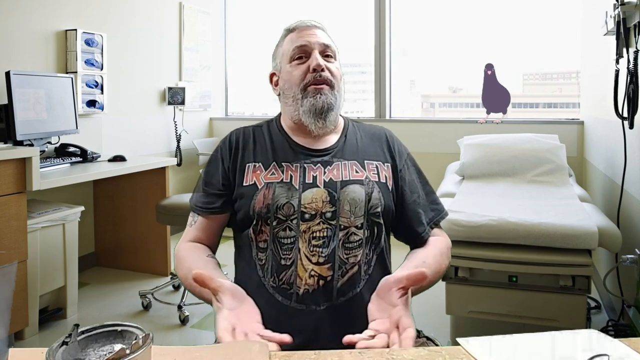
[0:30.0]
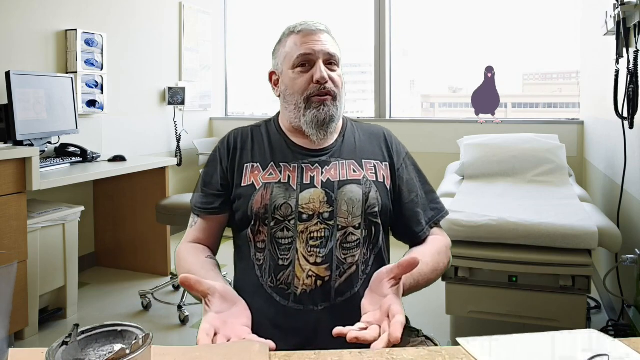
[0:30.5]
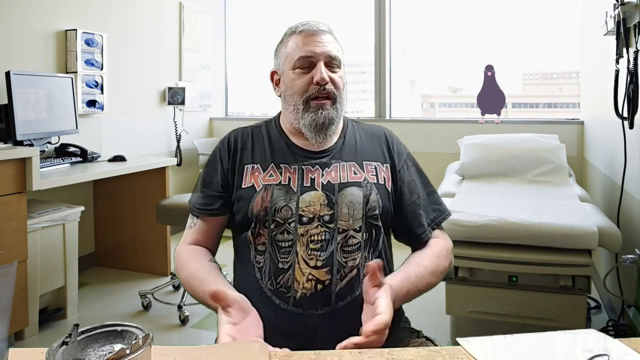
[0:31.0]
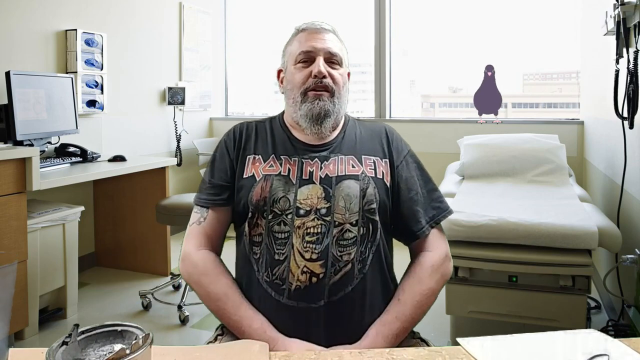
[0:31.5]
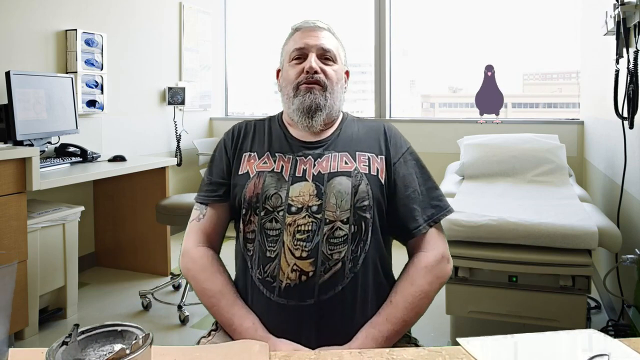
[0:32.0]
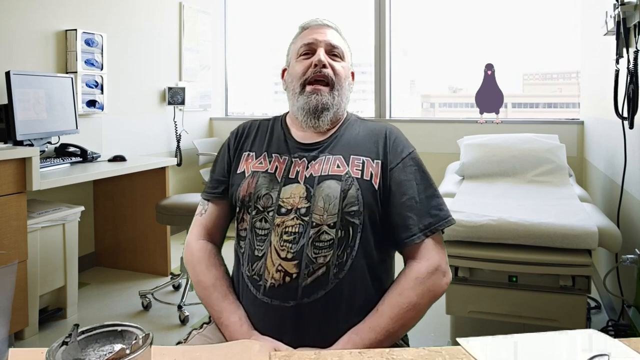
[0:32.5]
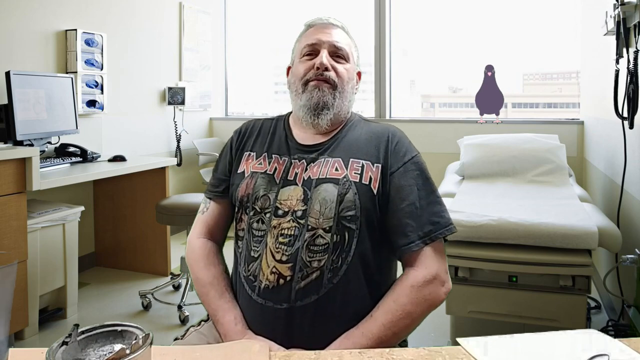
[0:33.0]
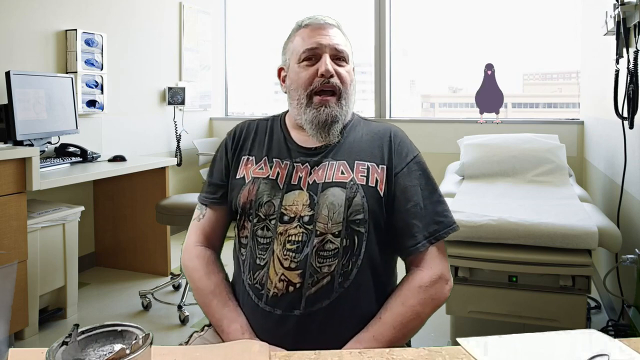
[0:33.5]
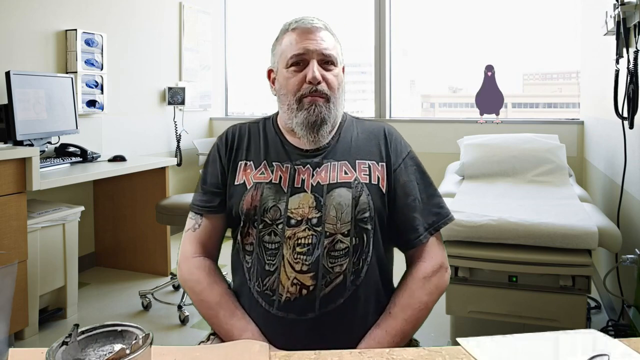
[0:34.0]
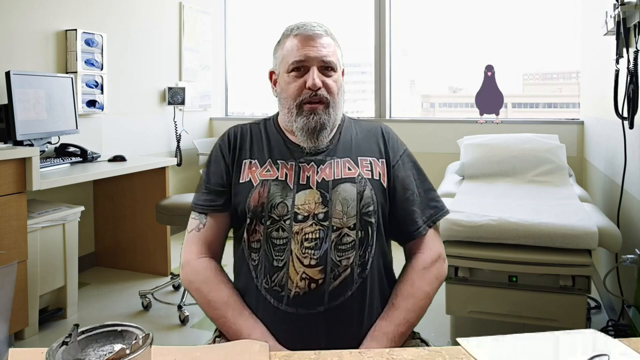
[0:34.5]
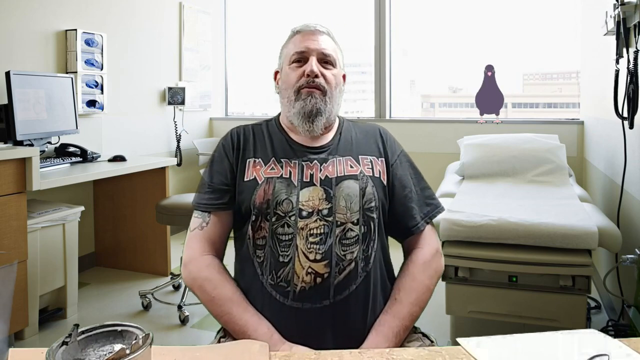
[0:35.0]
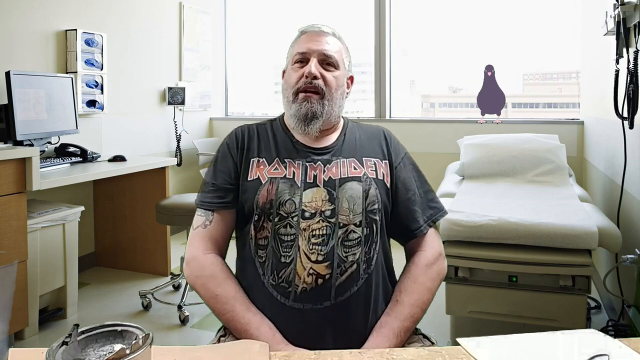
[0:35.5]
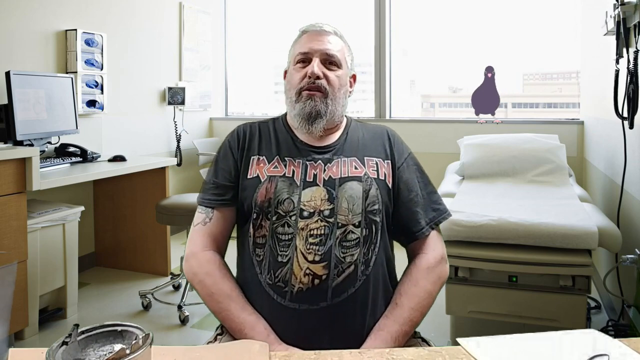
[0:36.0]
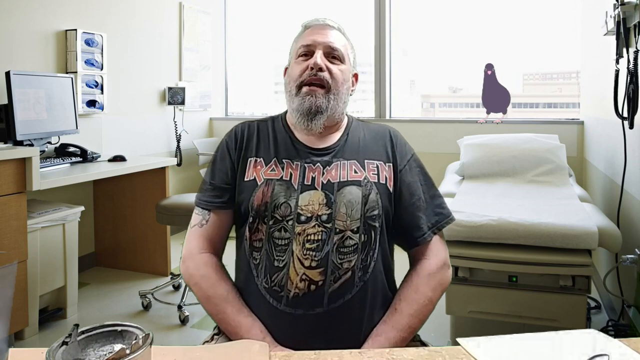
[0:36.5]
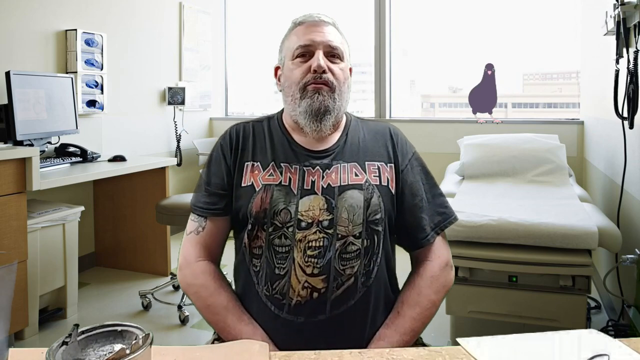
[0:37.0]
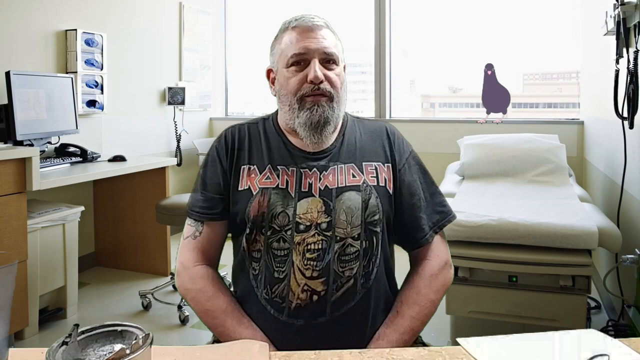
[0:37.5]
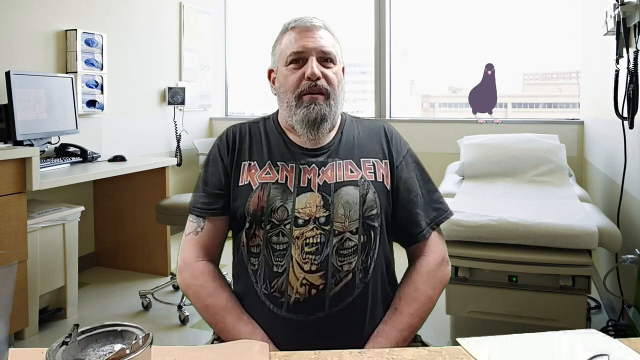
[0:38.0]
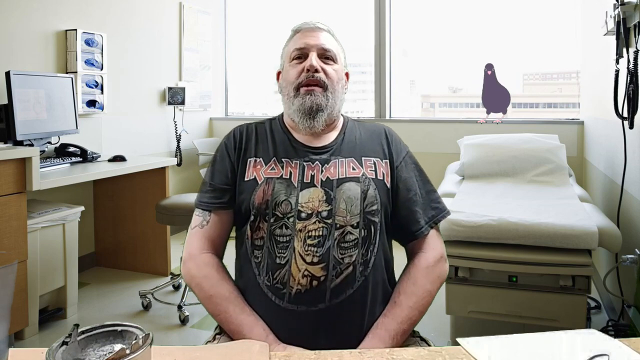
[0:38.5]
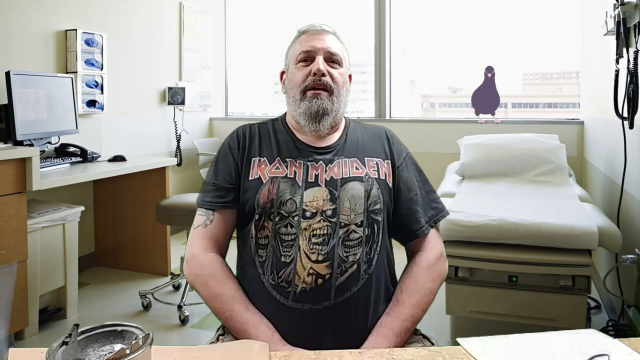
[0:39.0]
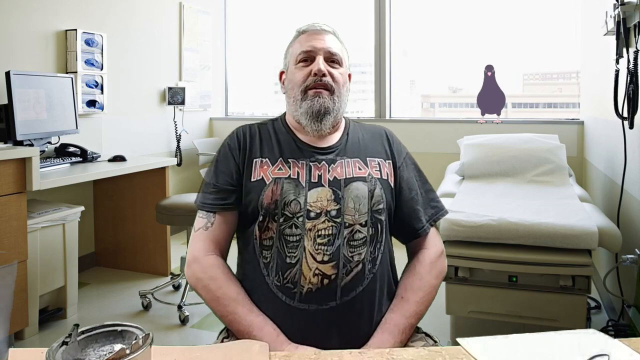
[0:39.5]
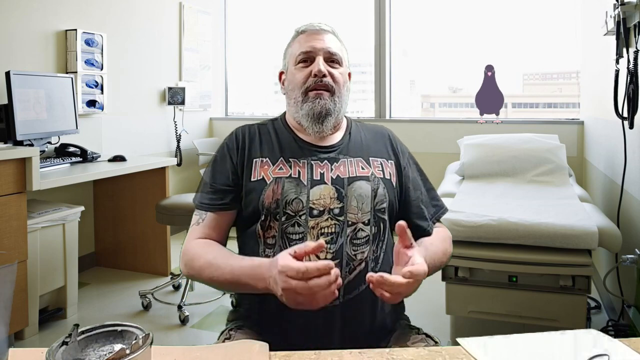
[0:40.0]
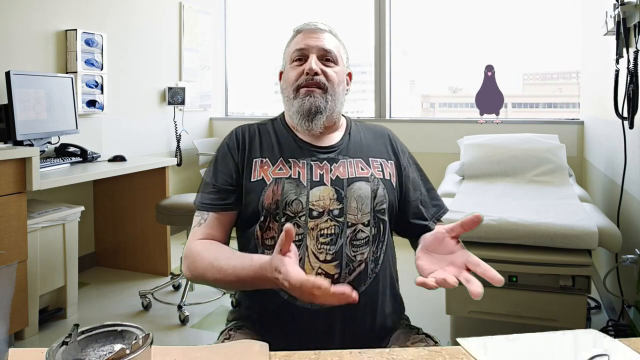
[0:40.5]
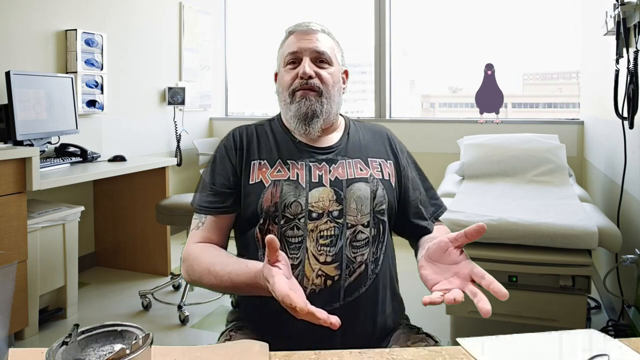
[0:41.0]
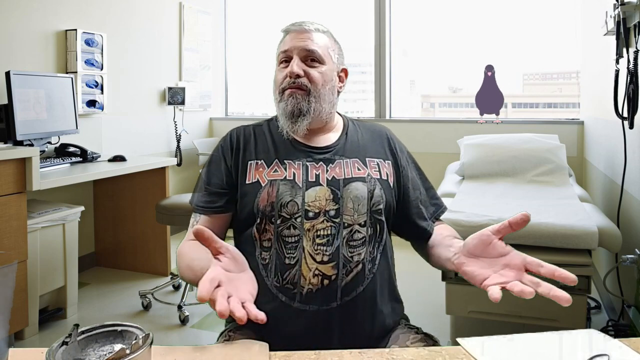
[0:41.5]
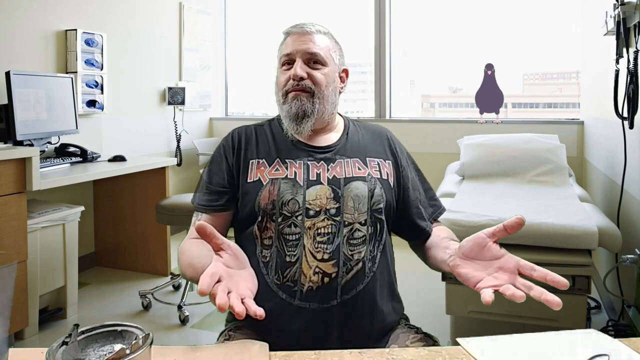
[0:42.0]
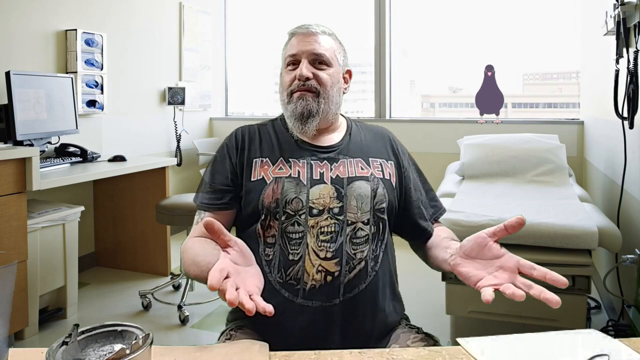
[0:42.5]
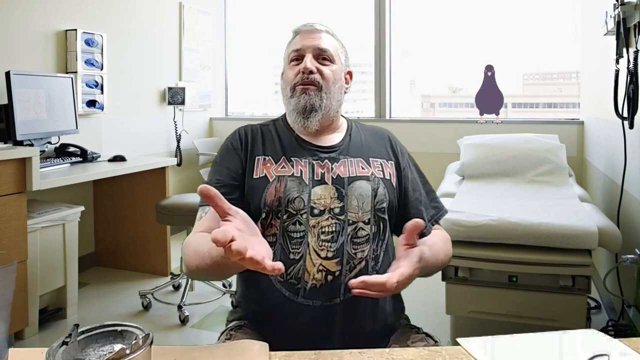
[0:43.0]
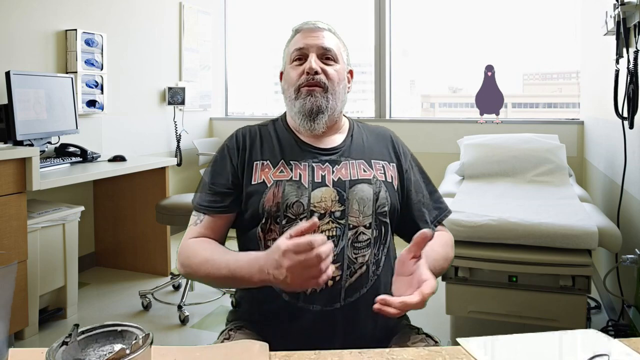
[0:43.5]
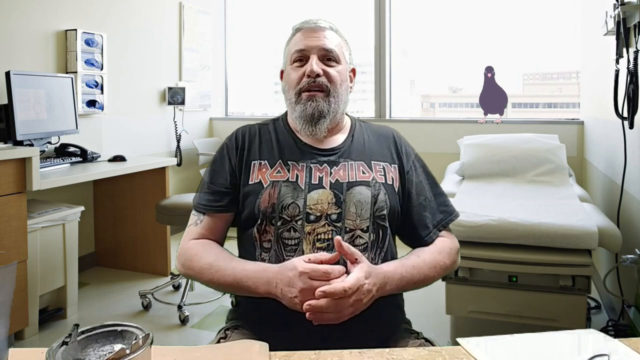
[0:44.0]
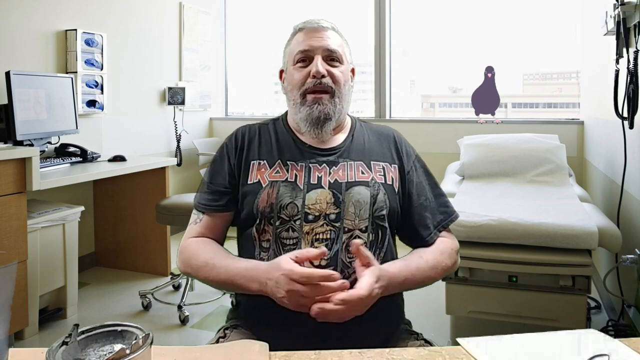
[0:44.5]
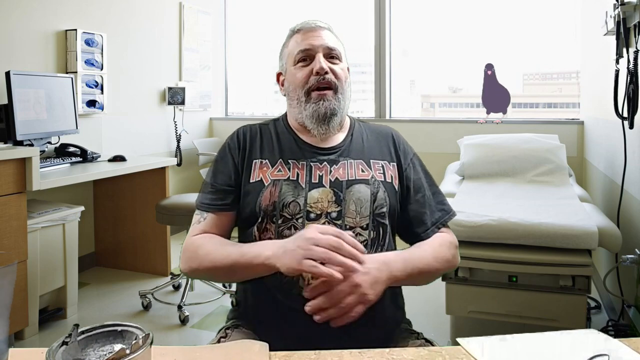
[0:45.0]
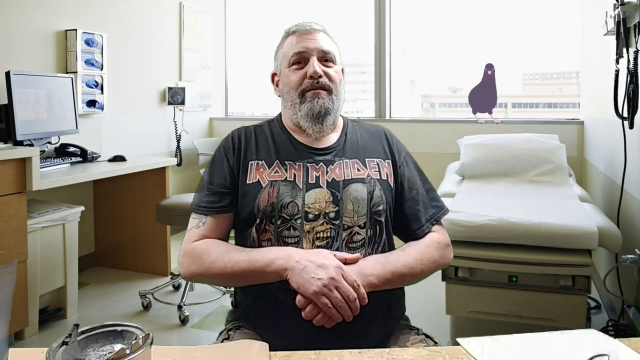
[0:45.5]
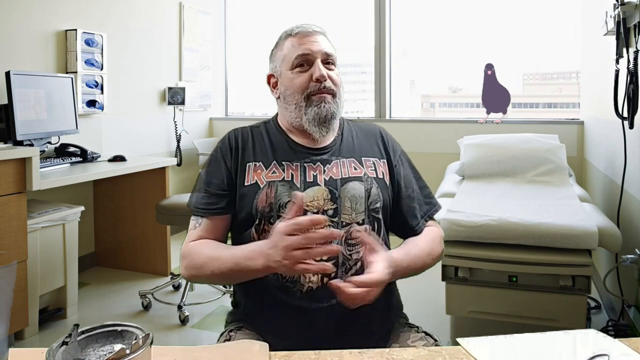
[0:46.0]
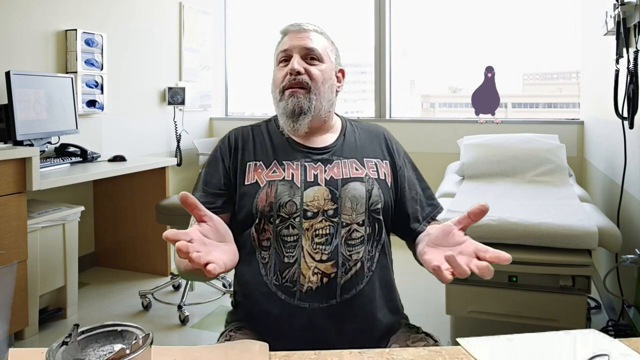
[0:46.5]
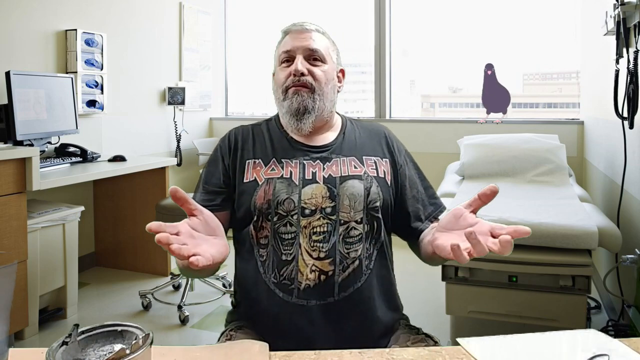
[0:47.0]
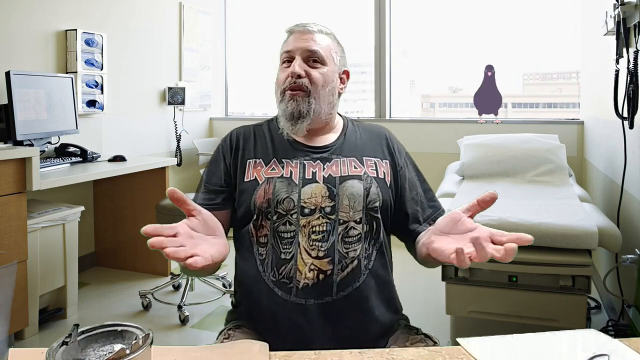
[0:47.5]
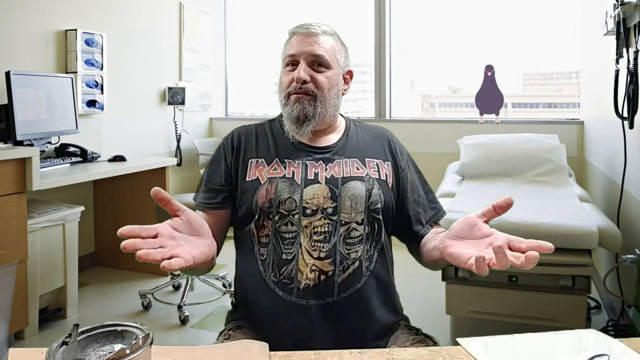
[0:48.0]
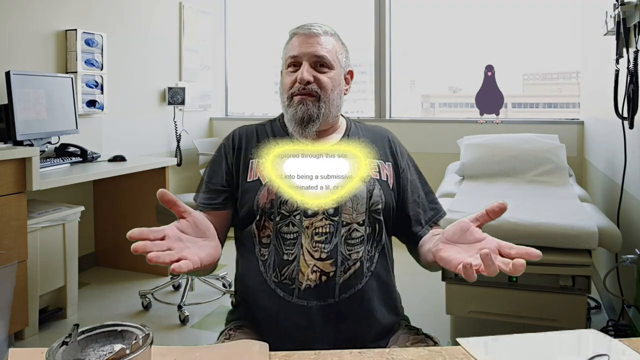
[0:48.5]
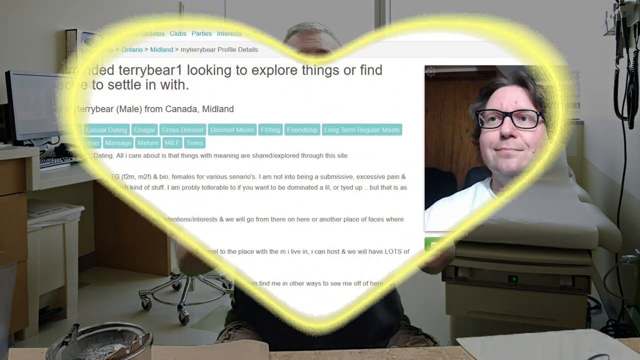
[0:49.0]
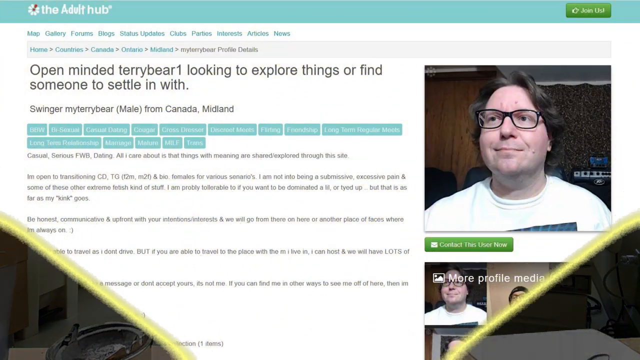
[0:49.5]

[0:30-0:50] The same man in the Iron Maiden shirt keeps talking and is very expressive with his hands. He has a tattoo on his arm, a beard, and short white hair. Some sort of apparatus appears, and near the end a heart graphic comes onto the screen with something else on it, cutting off too fast to read. The animated crow dances on the windowsill, and the top of a building is still visible outside the window. On the left are the computer, the phone next to it, and the mouse on the desk, along with the garbage can and a padded stool with a light gray seat on a base with wheels. The desk is wooden with an eggshell-colored desktop. The walls are dark tan partway up and a lighter eggshell color for the rest of the wall above. Four boxes of exam gloves are on the left side near the computer. Some sort of medical apparatus is on the left-hand wall next to a chair meant for someone accompanying a patient on the padded exam table. There looks to be a pillow on the padded exam table, along with sanitary paper, and there seems to be a pushed-in extension part on the table.